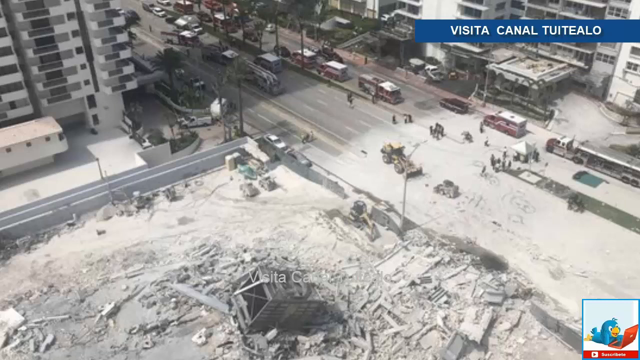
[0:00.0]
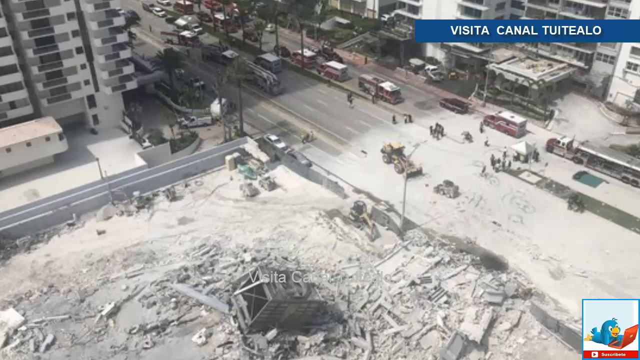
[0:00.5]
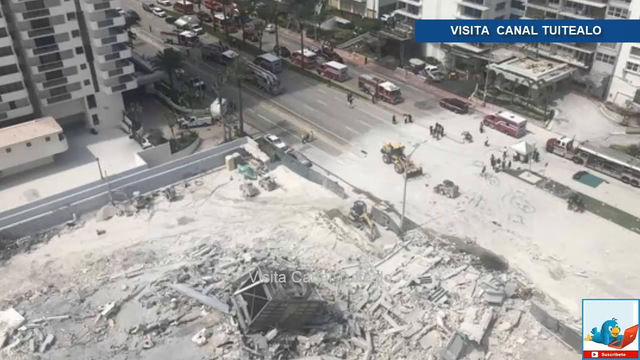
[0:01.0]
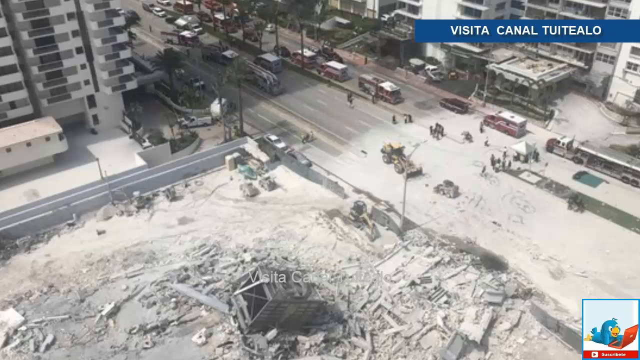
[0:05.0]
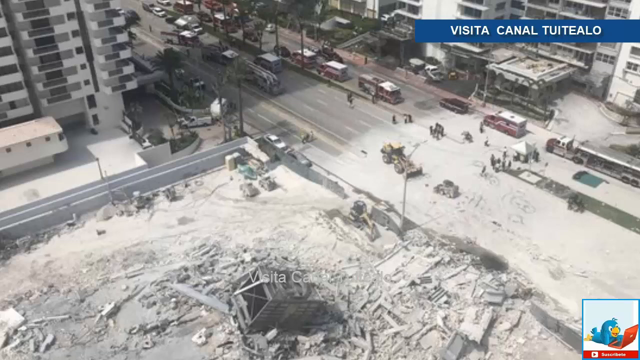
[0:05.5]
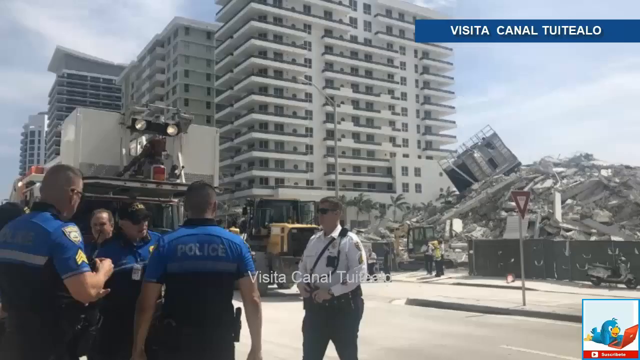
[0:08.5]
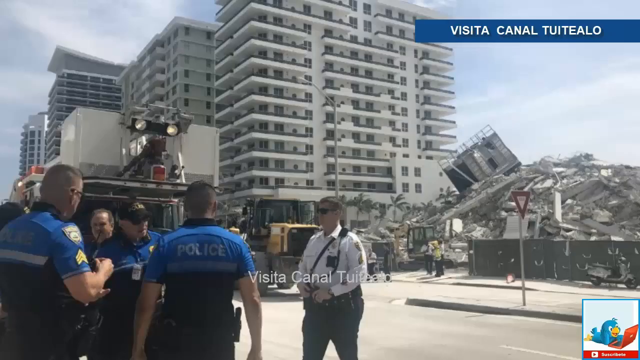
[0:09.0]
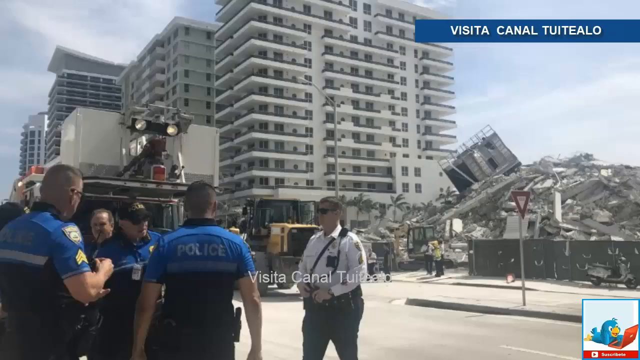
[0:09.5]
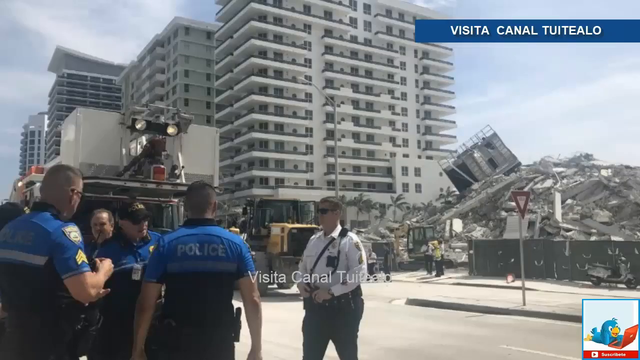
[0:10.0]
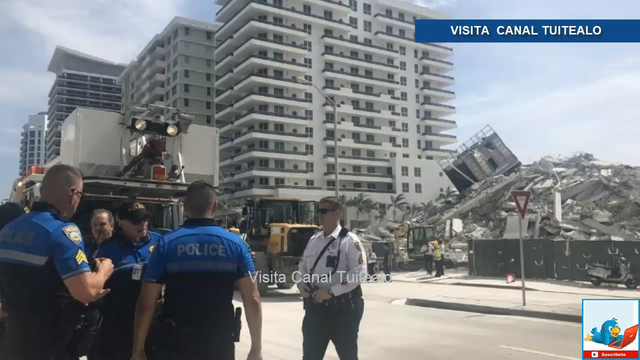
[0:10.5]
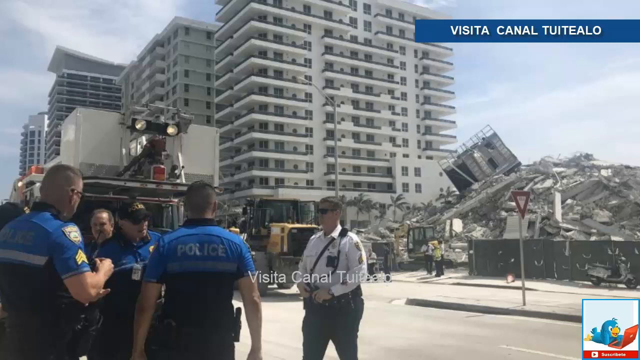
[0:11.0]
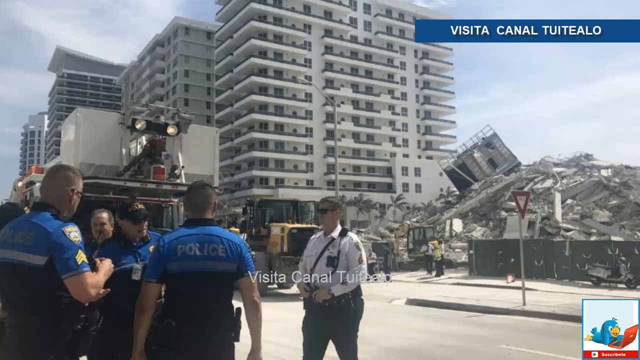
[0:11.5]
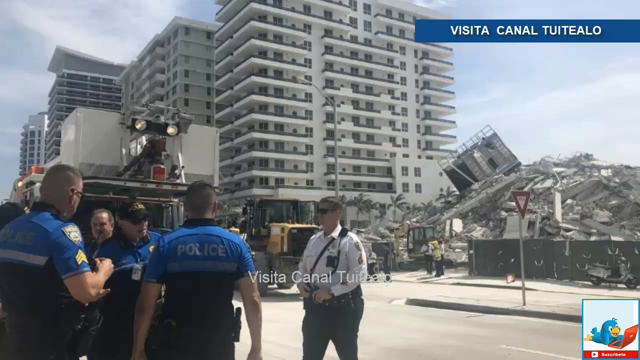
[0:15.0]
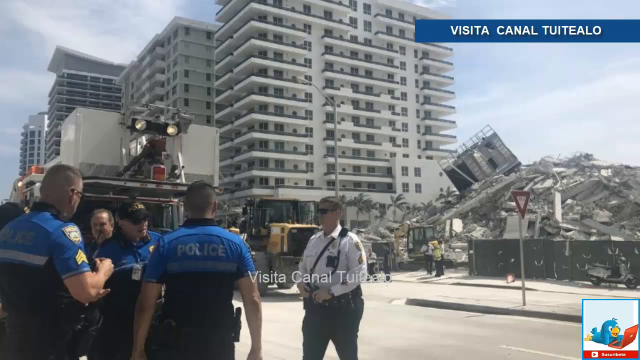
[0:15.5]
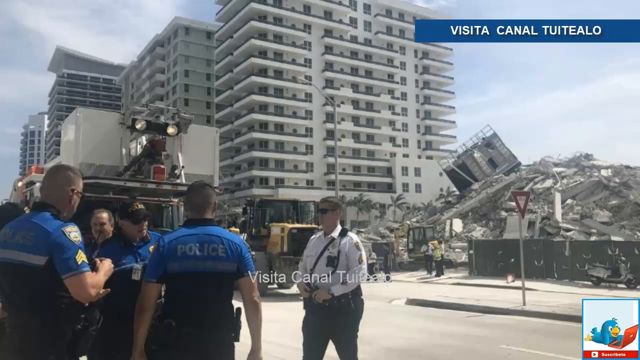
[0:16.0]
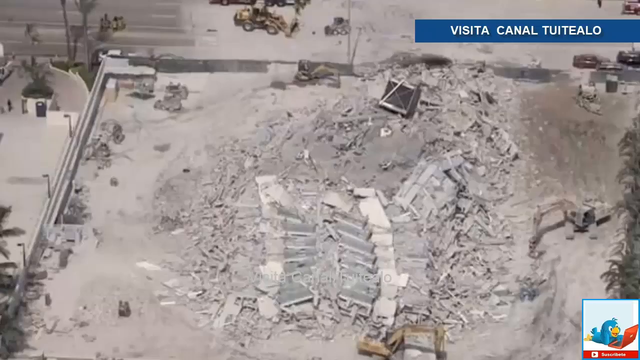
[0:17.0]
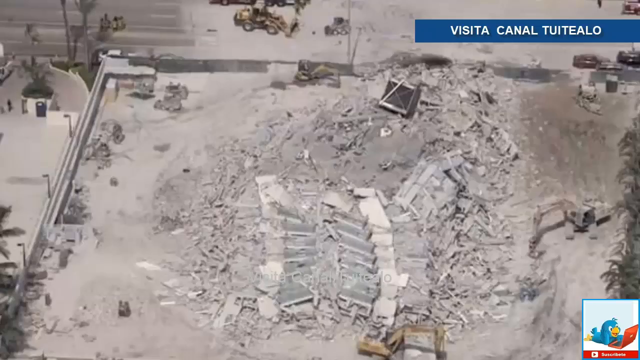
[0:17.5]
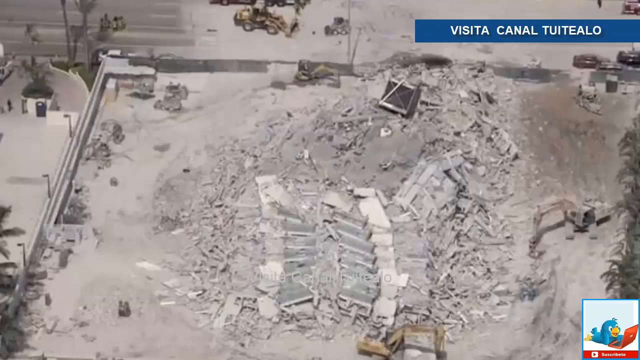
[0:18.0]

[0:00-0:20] The video opens on what looks like a major explosion or something of that nature, possibly massive snowfall or a building collapse. Police officers are standing around the collapsed ruin of a building, and there appears to be some construction equipment close by. It is unclear whether the building has collapsed or is being demolished. Another top view shows the building flattened to rubble. What caused the destruction cannot be determined from the images.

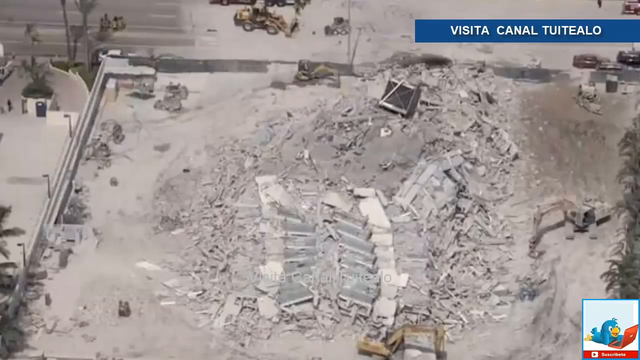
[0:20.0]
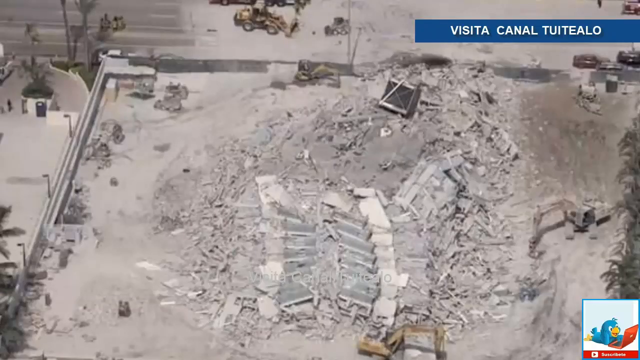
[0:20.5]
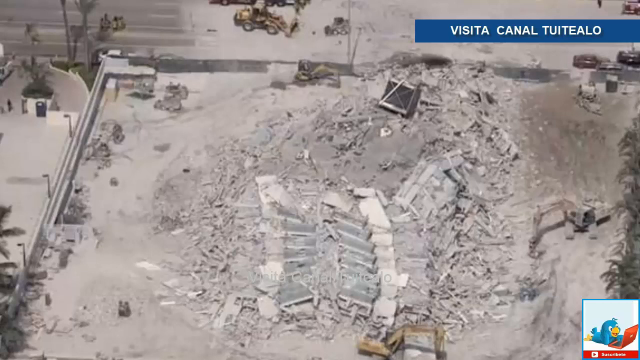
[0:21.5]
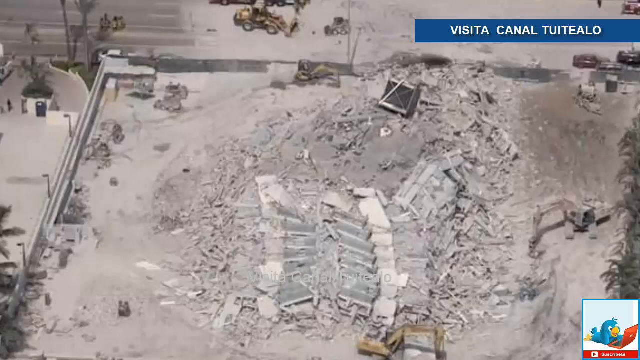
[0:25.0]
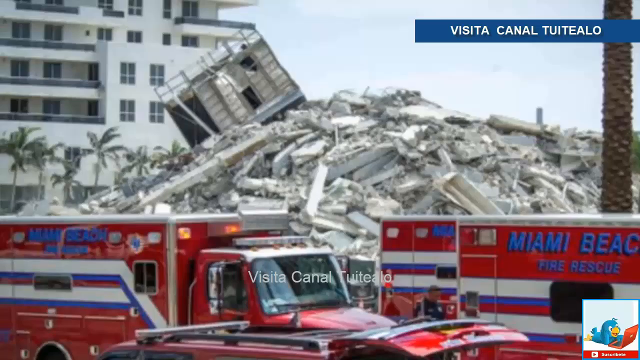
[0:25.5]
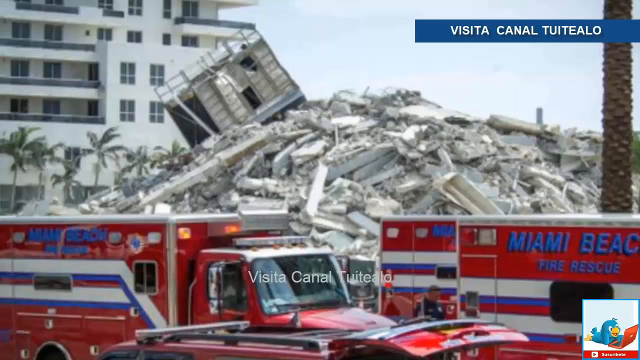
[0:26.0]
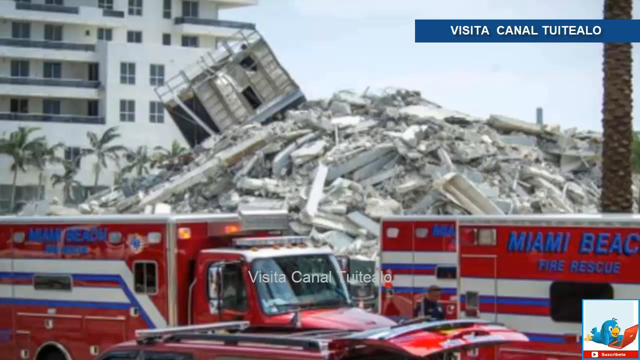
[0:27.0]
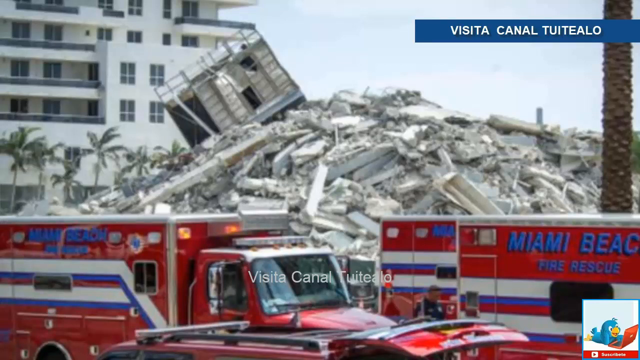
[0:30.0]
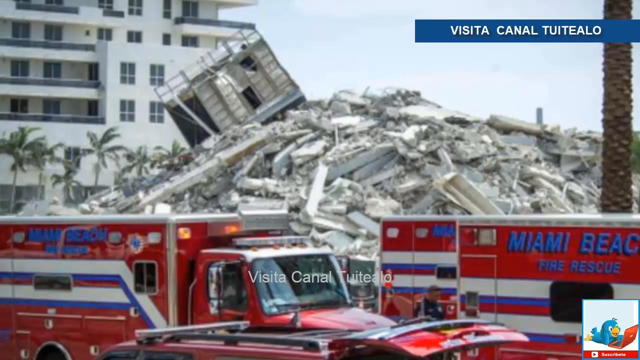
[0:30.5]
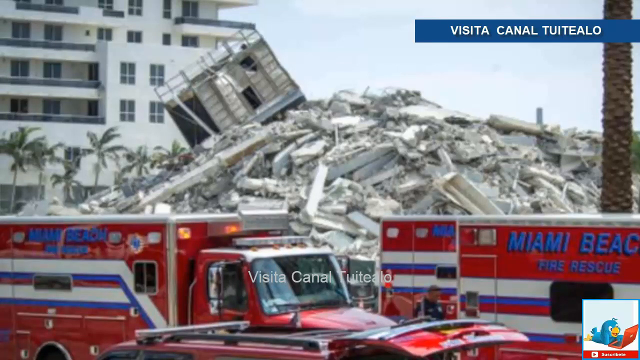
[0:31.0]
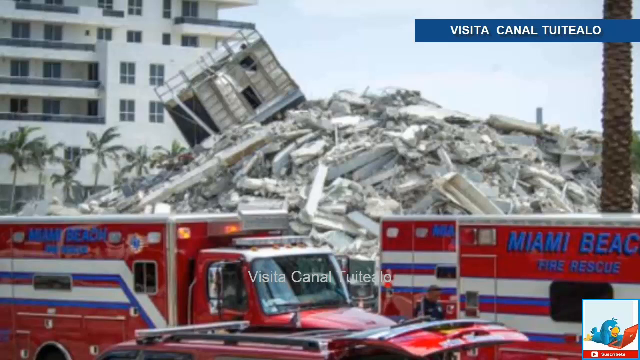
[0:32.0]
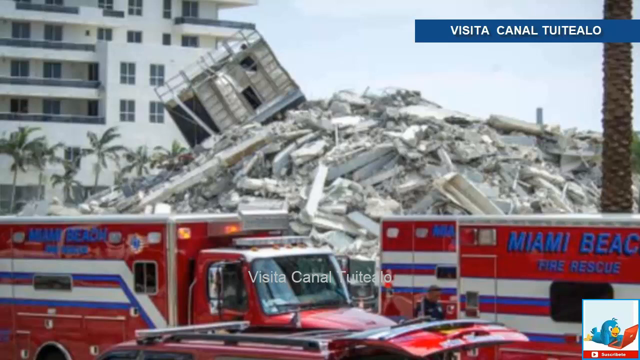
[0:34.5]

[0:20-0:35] A top-down view shows the rubble, and then a second view shows a few ambulances and fire trucks of Miami Beach fire rescue. There are apparently a number of palm trees. The surrounding buildings are undamaged, so the destruction may possibly be the result of a demolition, though what happened cannot be determined from the images.